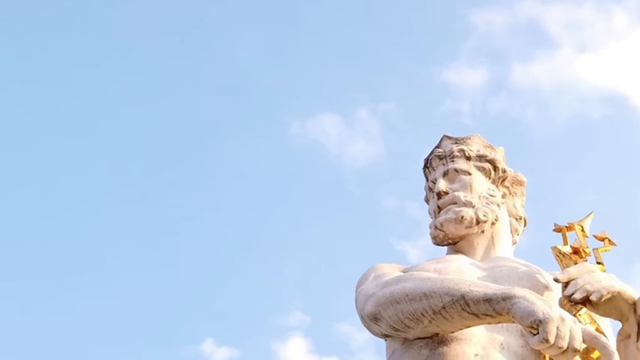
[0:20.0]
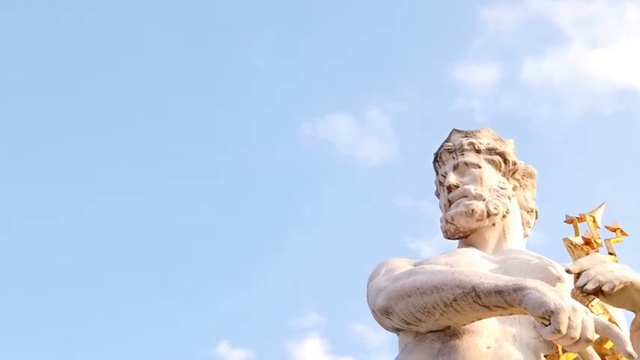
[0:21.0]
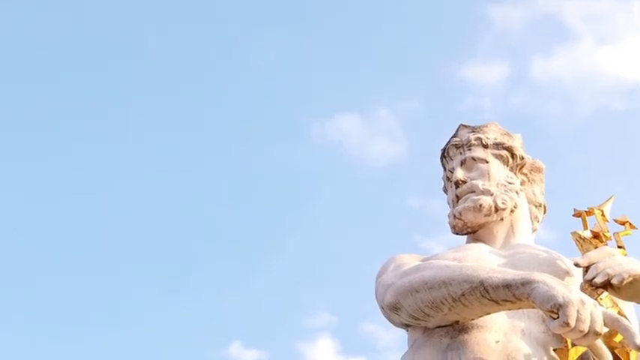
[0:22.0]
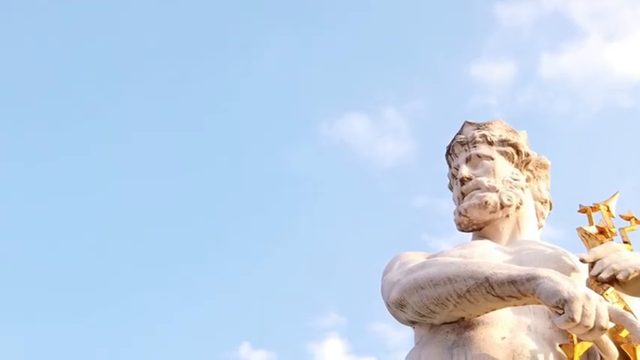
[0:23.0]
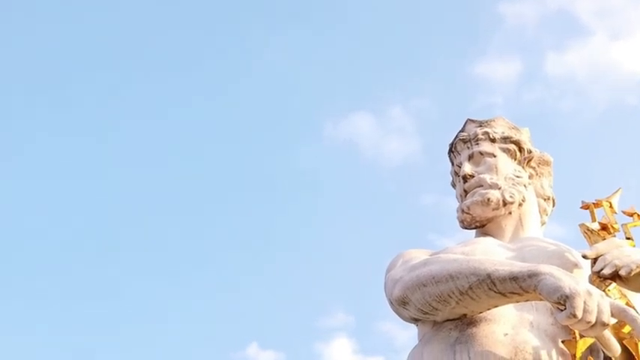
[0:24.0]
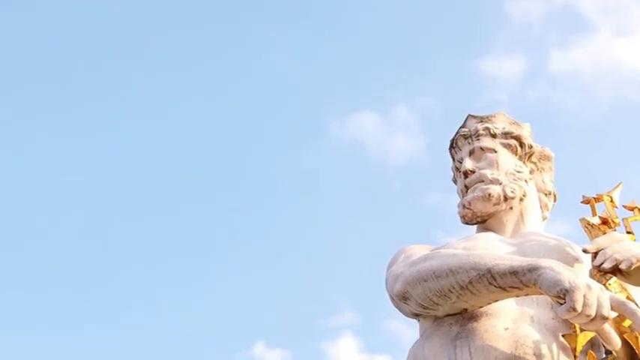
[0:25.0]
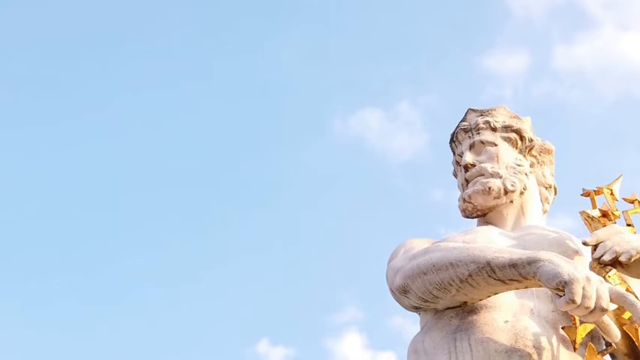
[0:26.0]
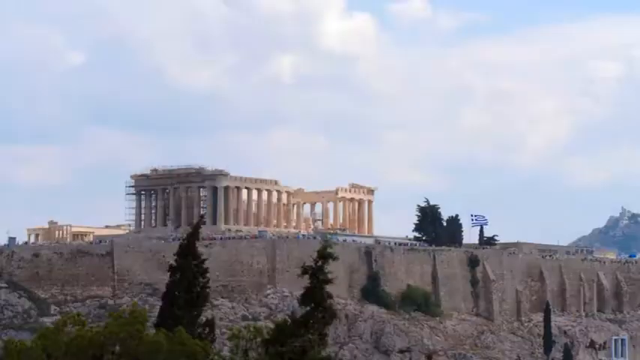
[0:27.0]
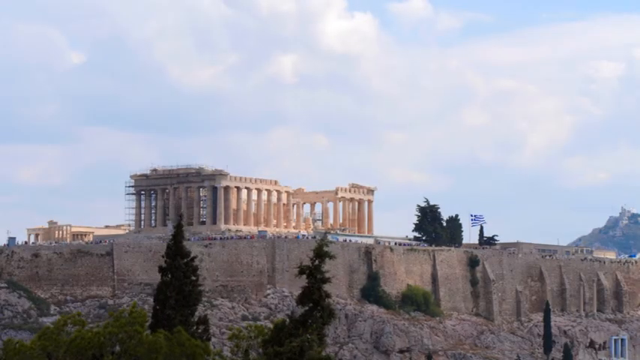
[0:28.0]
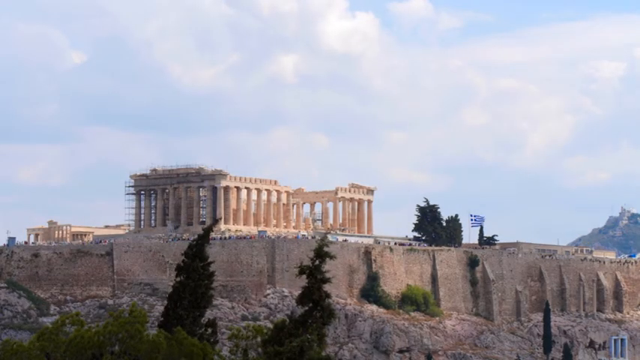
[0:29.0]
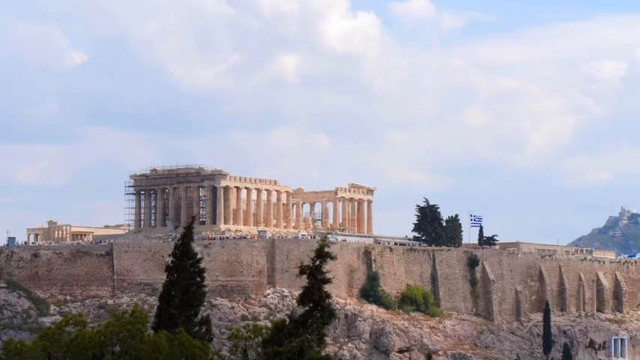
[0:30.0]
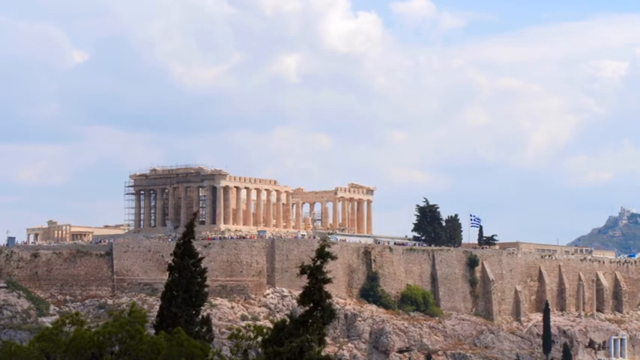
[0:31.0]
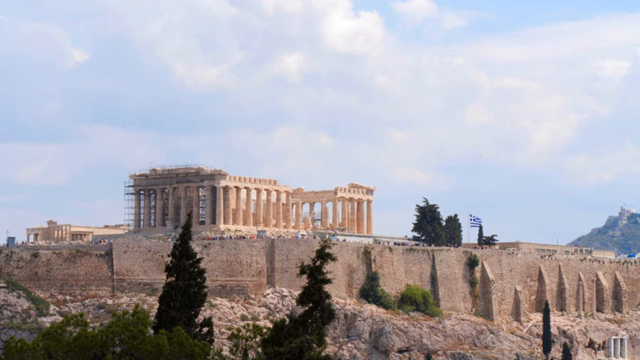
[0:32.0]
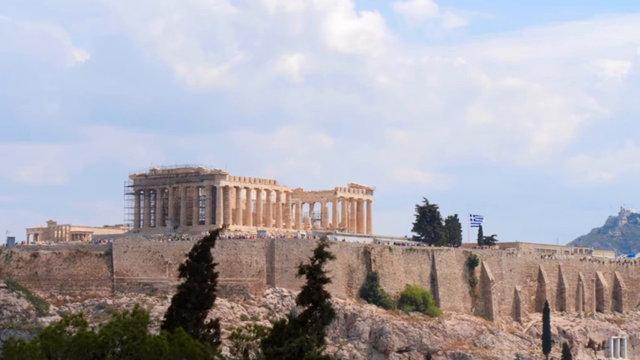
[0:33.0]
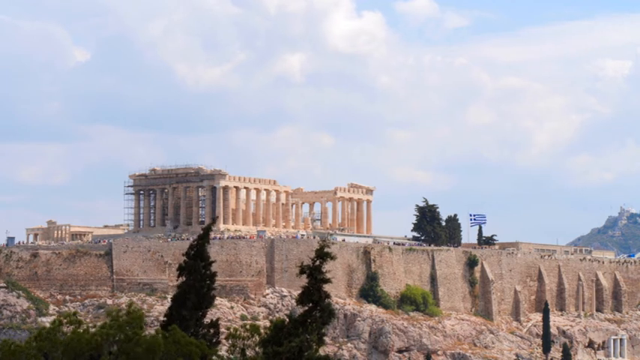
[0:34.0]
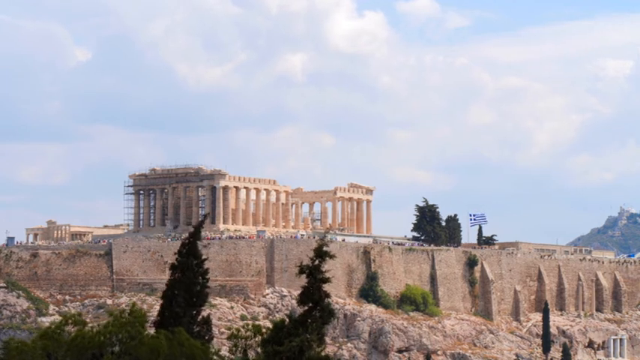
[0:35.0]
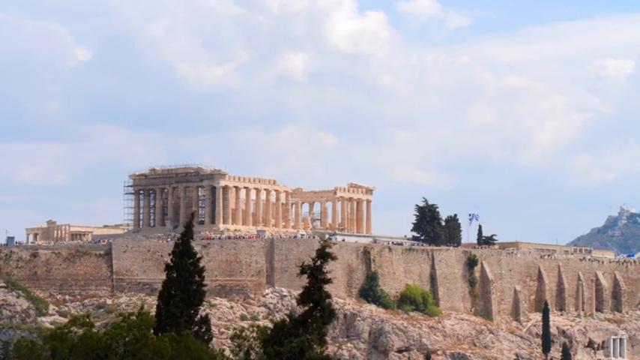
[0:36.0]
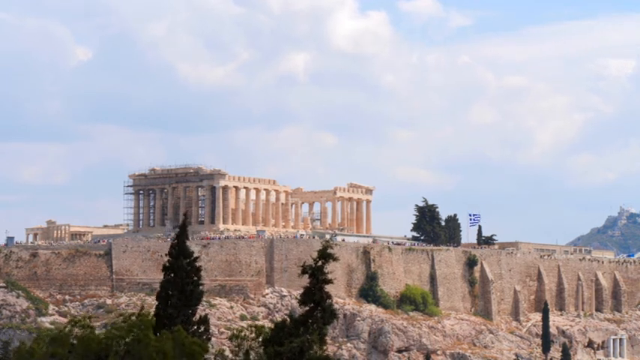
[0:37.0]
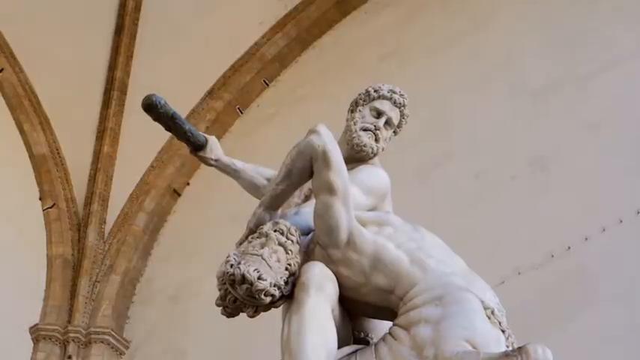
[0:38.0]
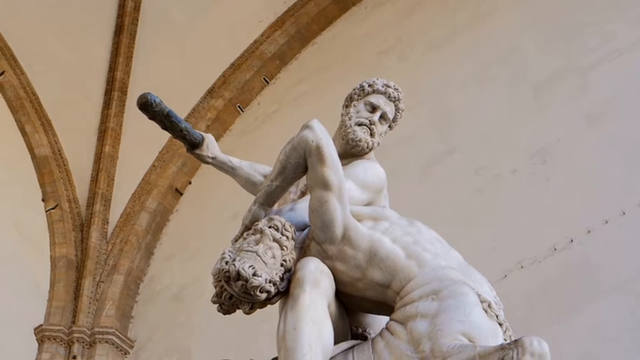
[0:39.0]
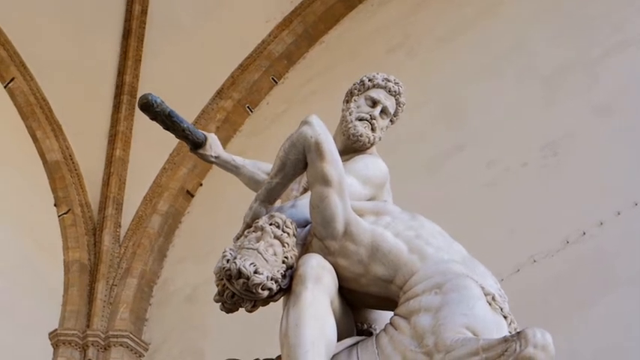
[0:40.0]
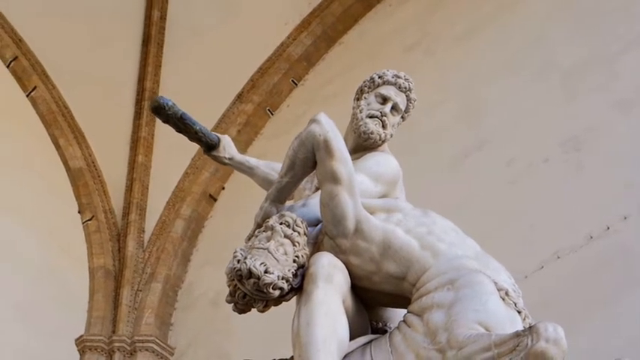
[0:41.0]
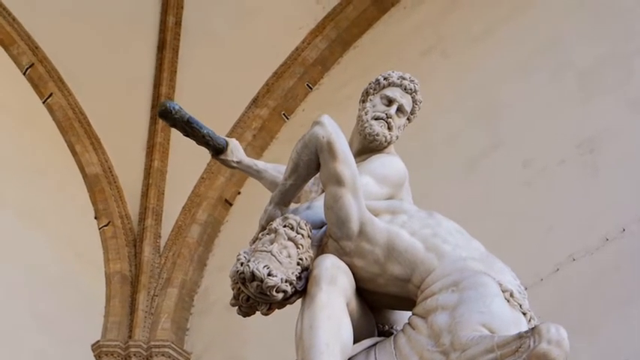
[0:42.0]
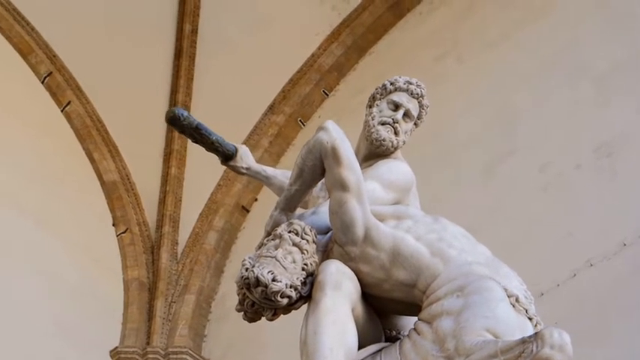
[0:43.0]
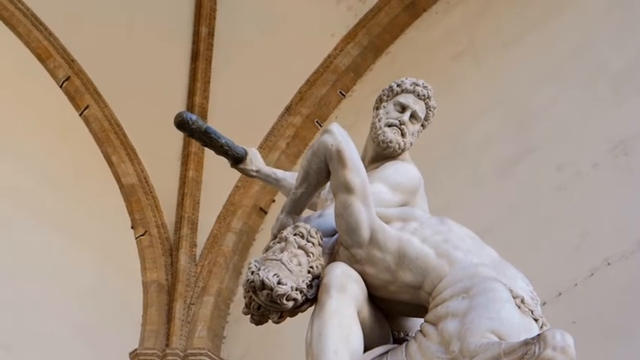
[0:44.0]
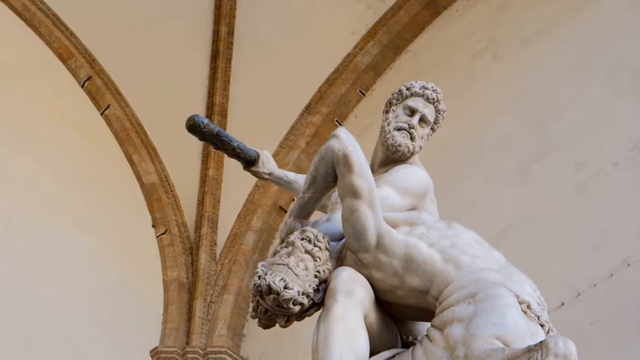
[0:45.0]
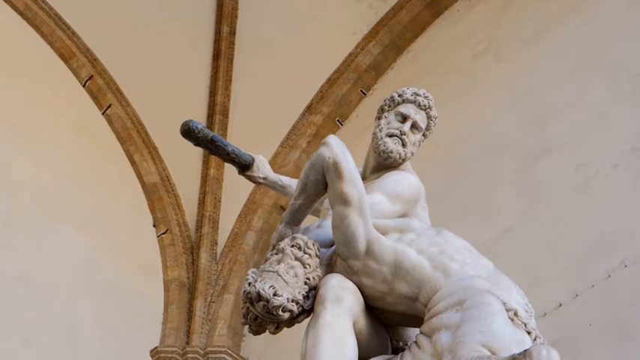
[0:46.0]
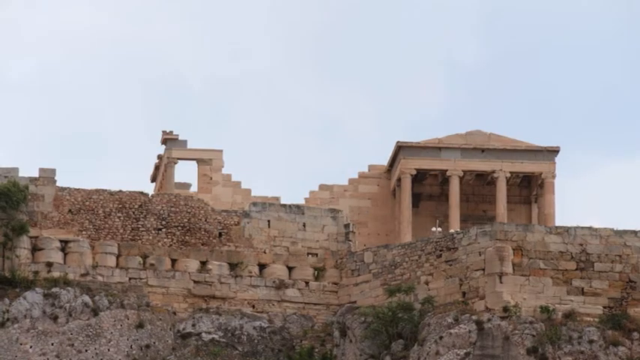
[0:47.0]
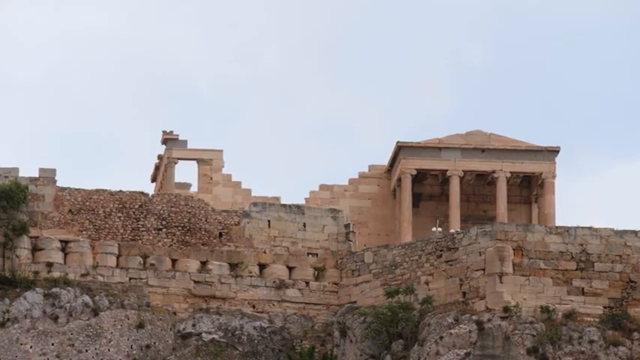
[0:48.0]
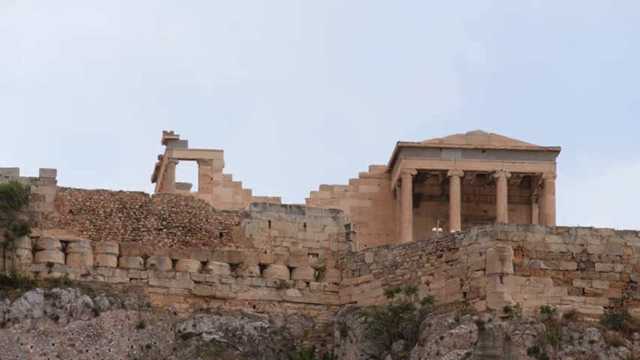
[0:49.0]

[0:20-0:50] A white marble statue is outdoors, and the scene then transitions to an image of the Parthenon on top of the Acropolis. The Parthenon has metal scaffolding on its front, and one section is missing portions of its columns, with the beam that runs across the top of the columns missing. Buttresses are against the large base on which the Parthenon is situated. Hordes of tourists are on the large platform in front of the building, and a shorter building is next to it on top of the Acropolis. The sky is blue but mostly covered with white clouds. Cypress trees in the foreground blow in the wind, and a large Greek flag blows behind the Parthenon. The scene then transitions to another marble statue, this one of a man clubbing another; one figure has his head draped over one knee, and the other hand is outstretched holding a thick club. The statues are housed under a white vaulted ceiling.